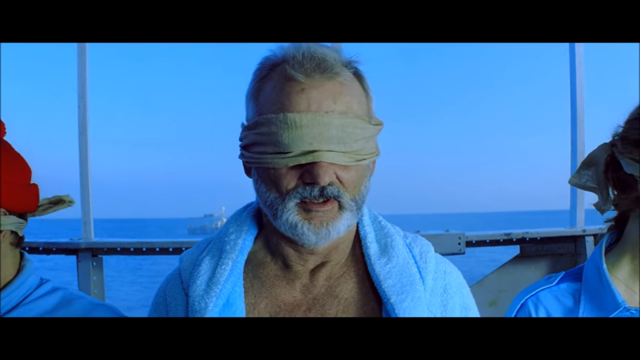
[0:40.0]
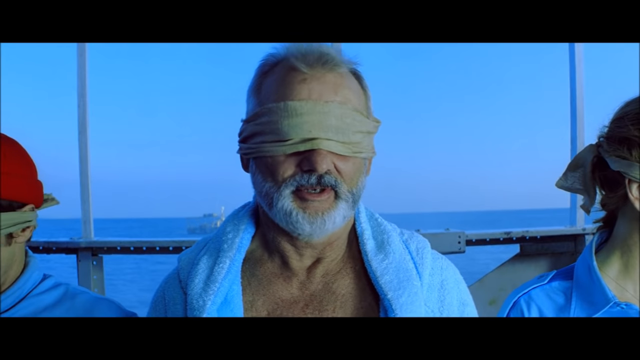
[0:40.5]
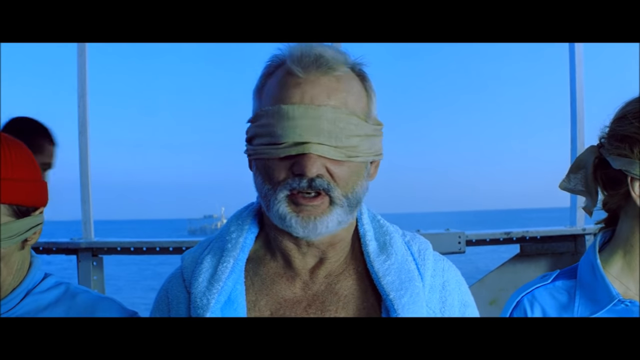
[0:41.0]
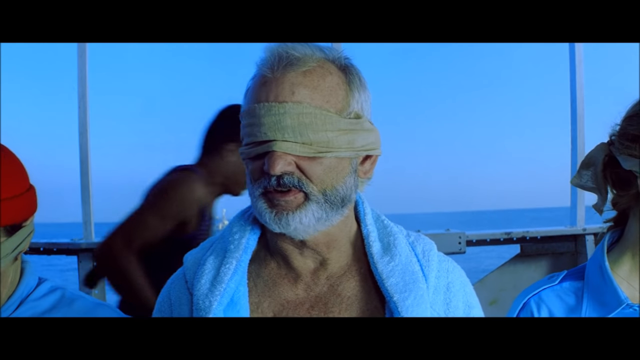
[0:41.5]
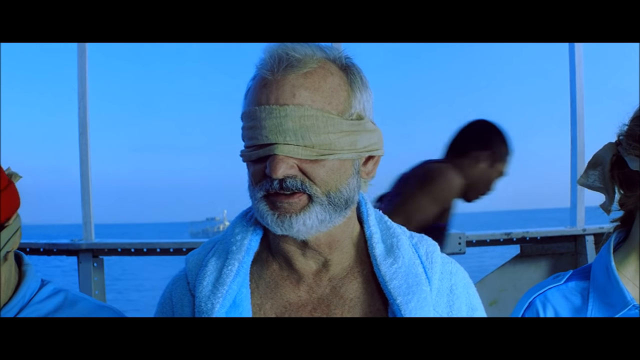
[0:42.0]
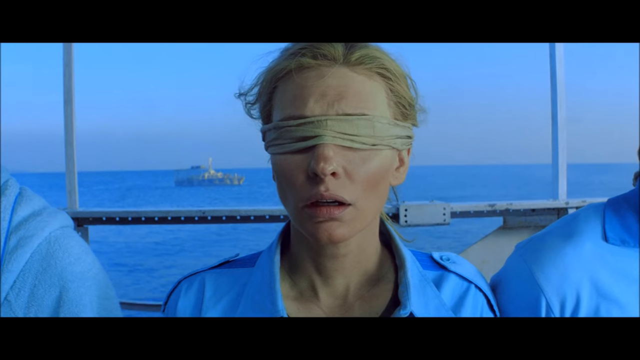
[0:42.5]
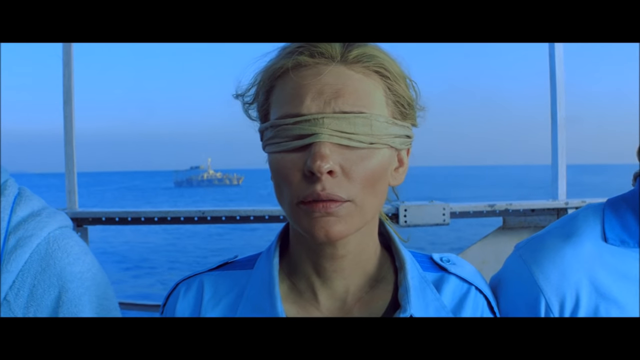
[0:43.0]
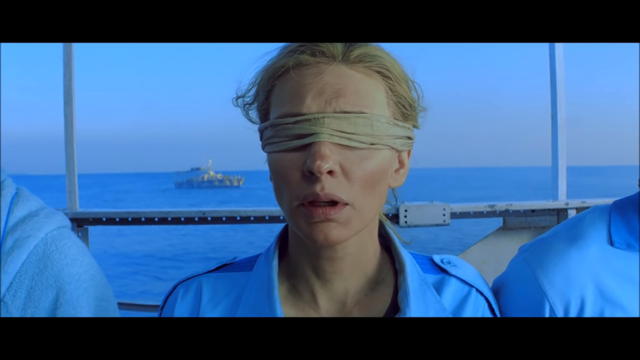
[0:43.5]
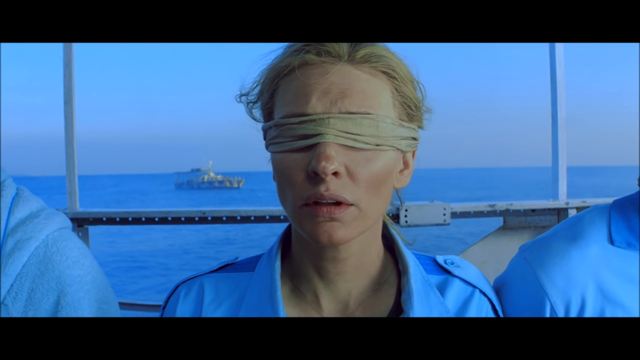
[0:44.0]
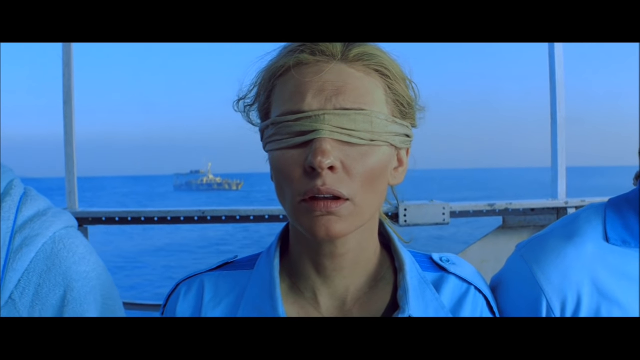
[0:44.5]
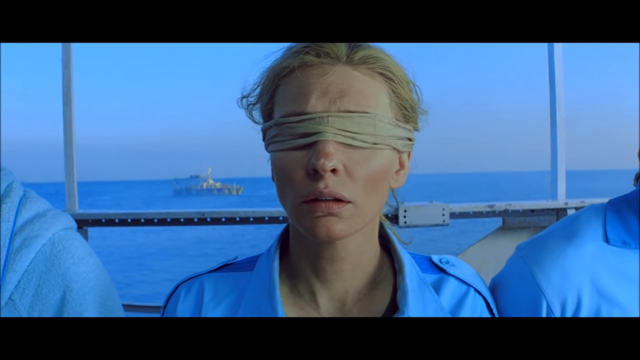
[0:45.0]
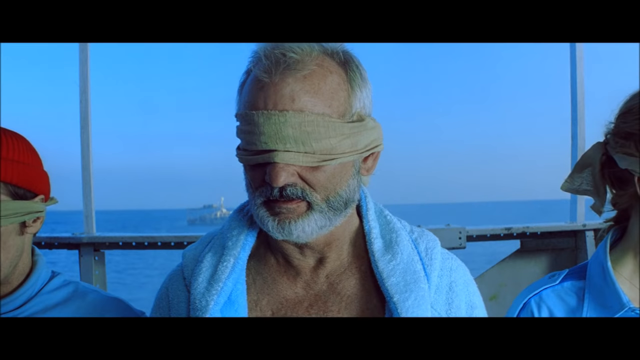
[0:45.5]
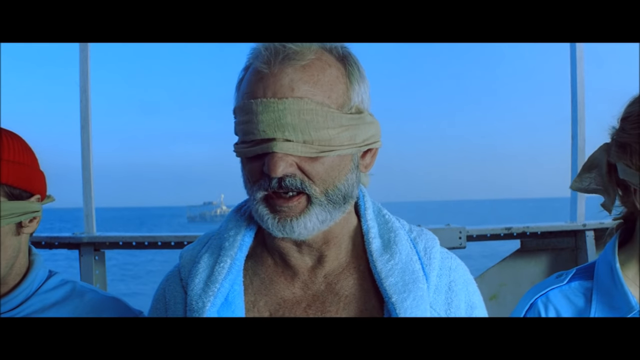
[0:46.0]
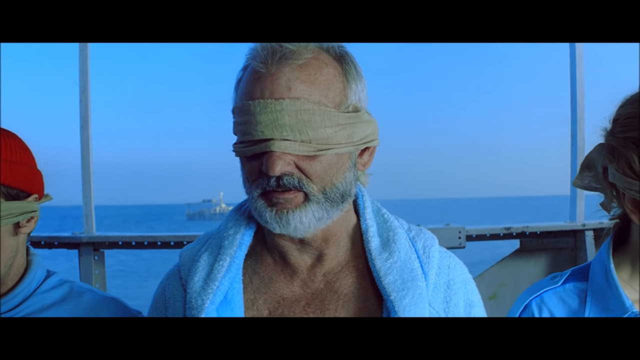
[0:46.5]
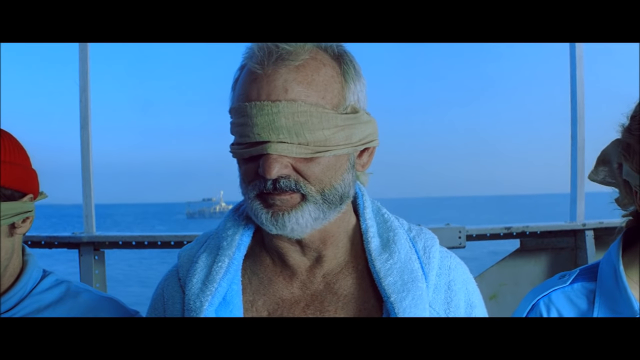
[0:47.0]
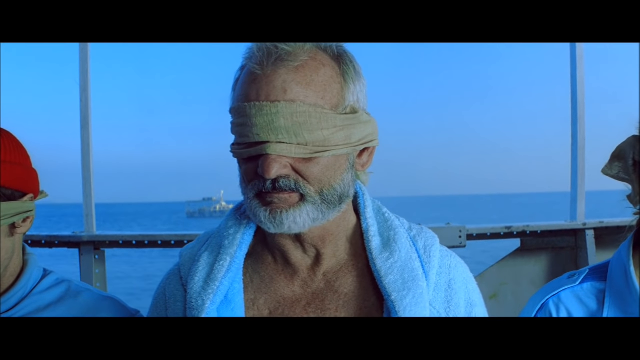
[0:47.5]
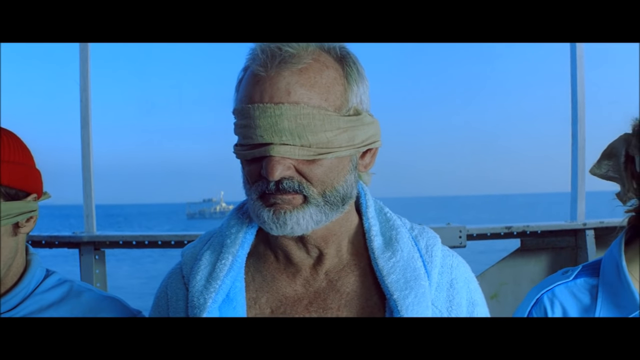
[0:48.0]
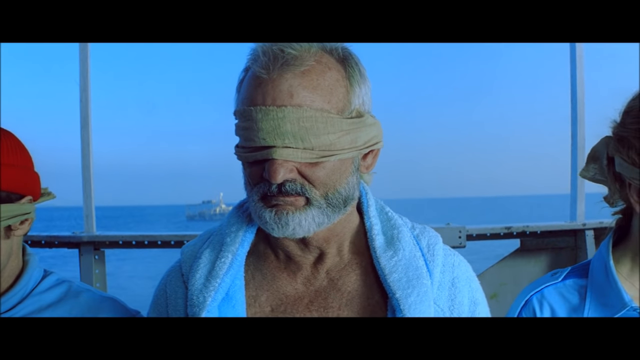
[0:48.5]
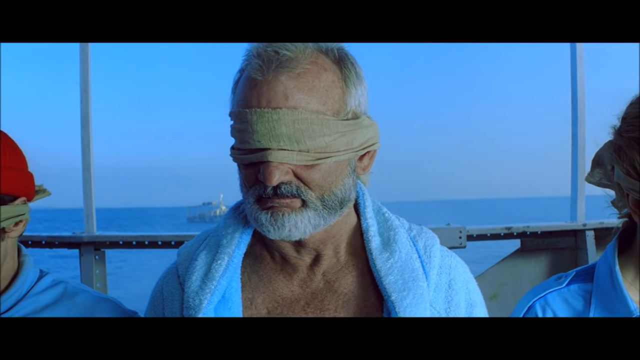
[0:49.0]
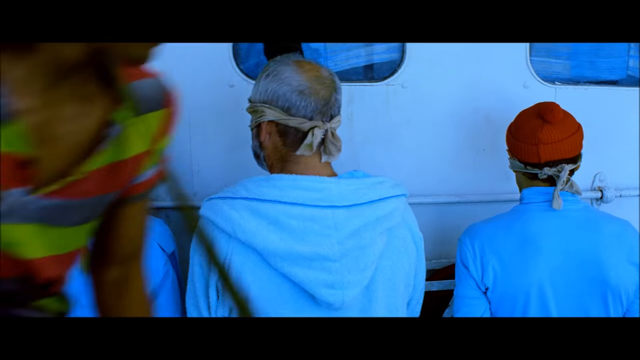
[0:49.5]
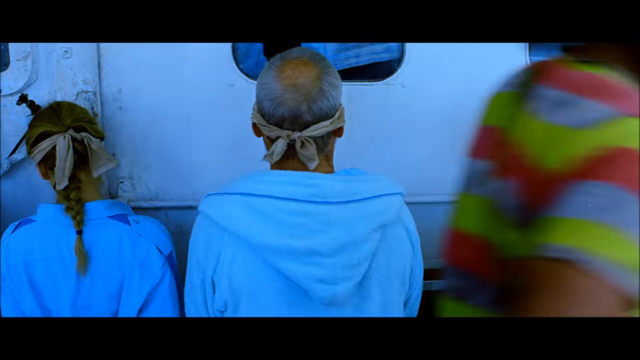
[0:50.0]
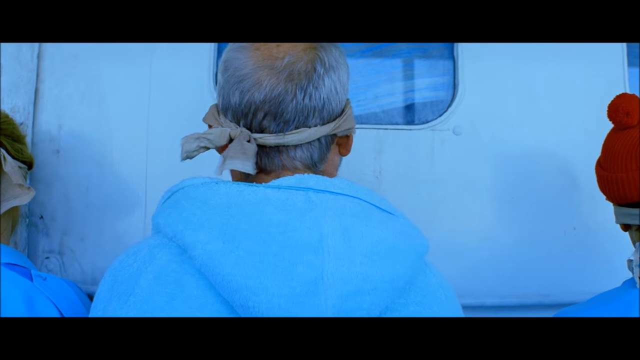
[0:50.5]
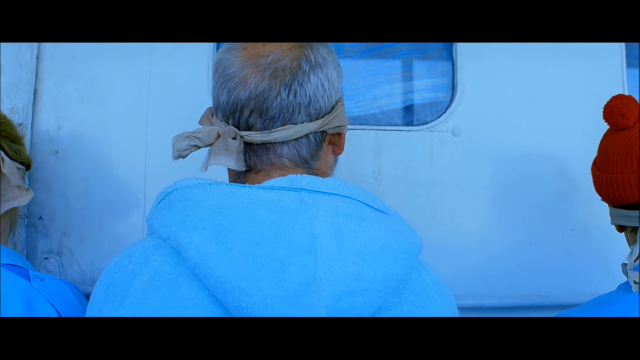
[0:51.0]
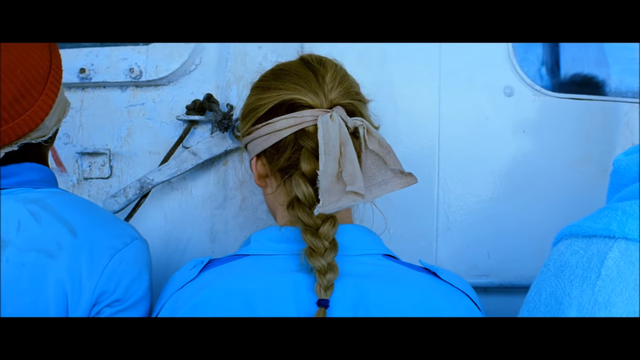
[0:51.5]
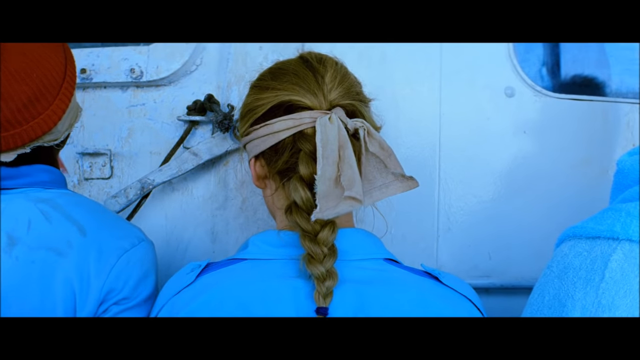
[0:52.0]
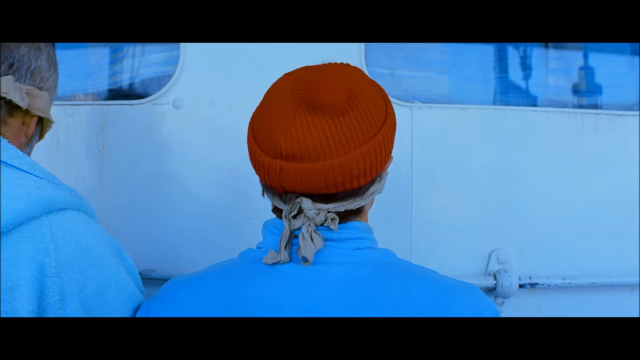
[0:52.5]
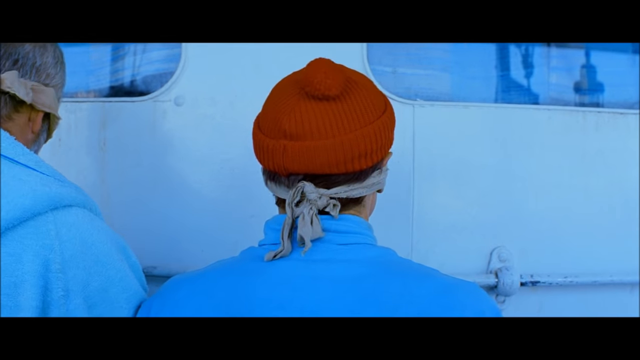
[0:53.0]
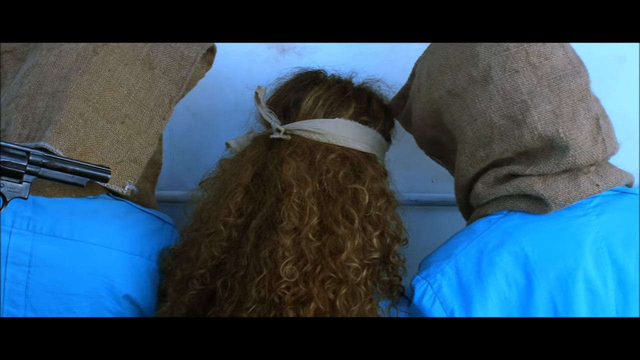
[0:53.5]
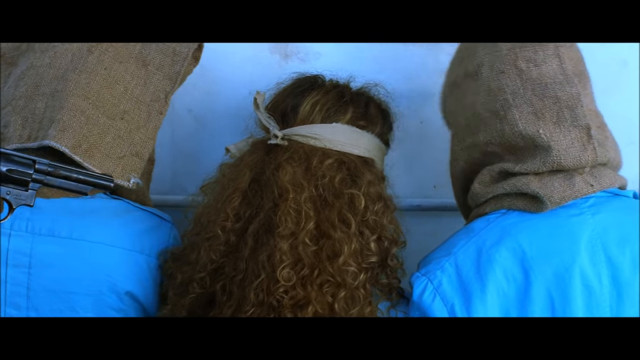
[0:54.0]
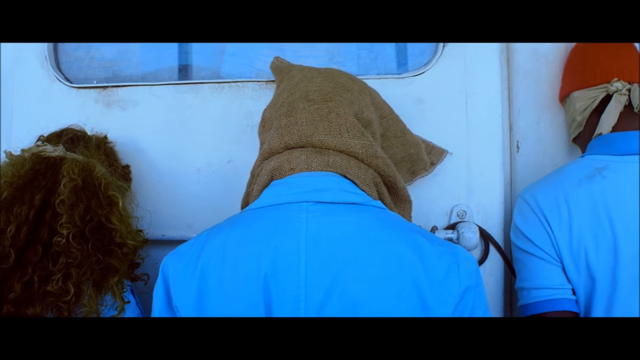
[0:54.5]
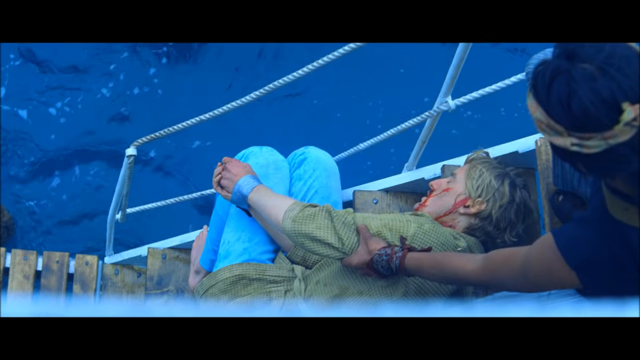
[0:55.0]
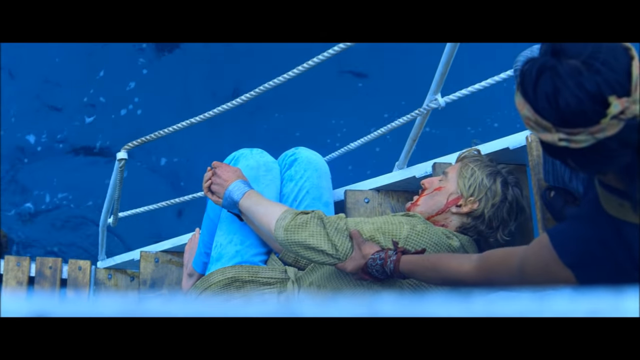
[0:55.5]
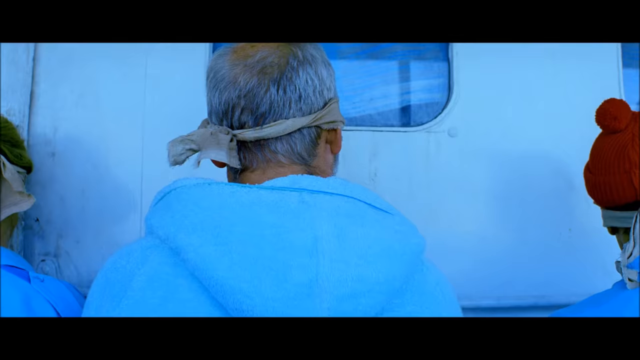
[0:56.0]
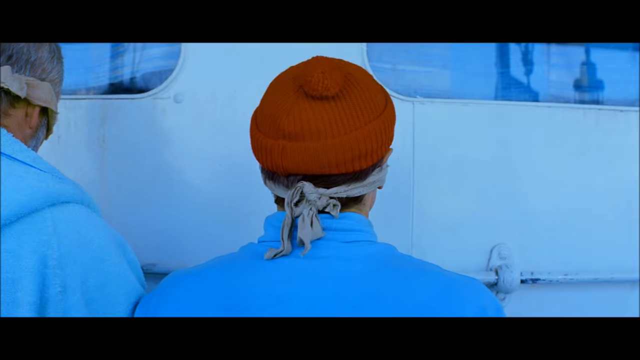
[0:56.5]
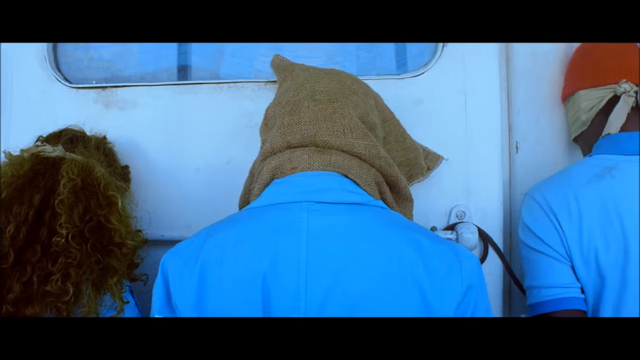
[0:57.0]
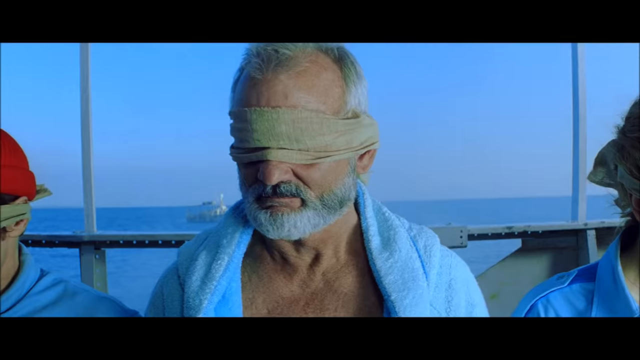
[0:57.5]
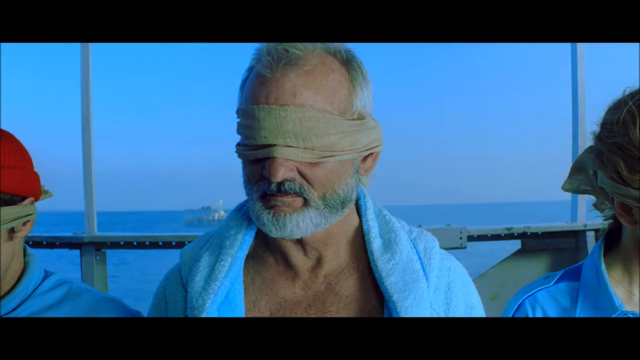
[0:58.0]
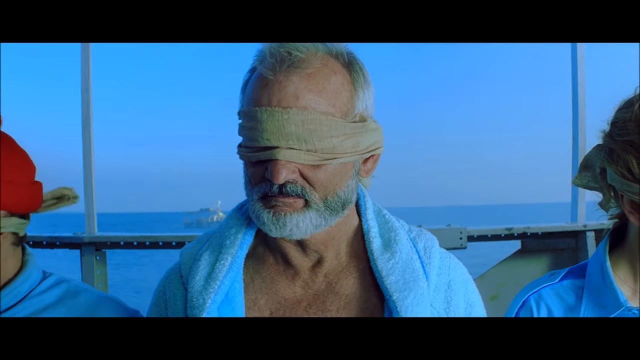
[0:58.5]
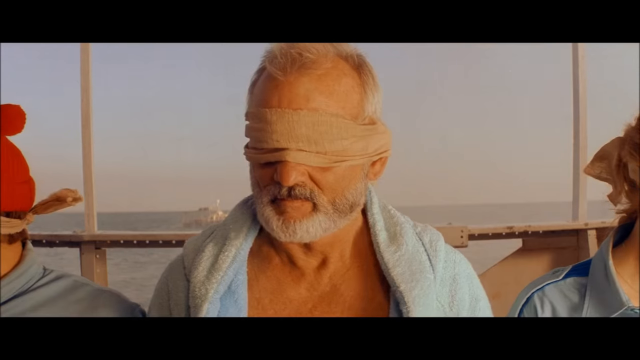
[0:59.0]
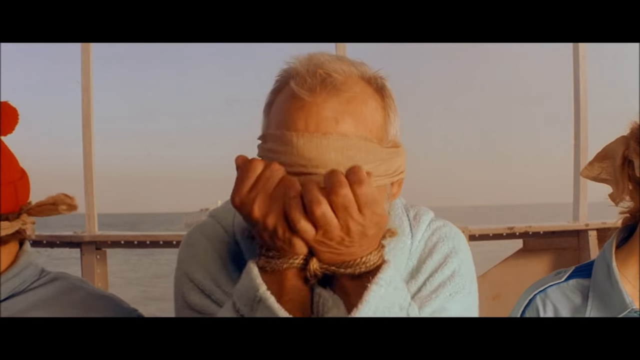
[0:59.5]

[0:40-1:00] Bill Murray is in the center of the screen with his eyes covered by a cloth as he speaks. A man with dark brown skin passes behind him, and the ocean is visible since they are on a boat. The camera pans to Cate Blanchett's face; her eyes are also covered by a cloth, and she speaks, seemingly going back and forth with Bill Murray. They are then seen from behind, along with Willem Dafoe, who wears the red beanie and also has his eyes covered. More of the crew appear: a woman in the middle with brown curly hair and her eyes covered by a cloth, and two people dressed in light blue with their heads covered by brown bags, who are being pointed at with a revolver from behind. The blonde man is shown again, bloody on the stairs of the boat. Bill Murray's face appears with his eyes almost a purple color, as if it were a vision. Finally, Bill Murray is seen in warmer lighting, as if hours have passed, and he starts biting the rope tying his hands.